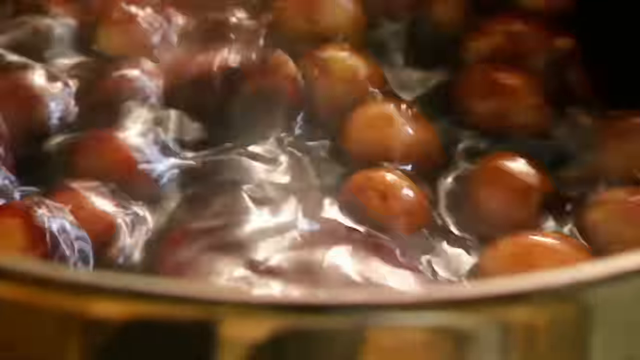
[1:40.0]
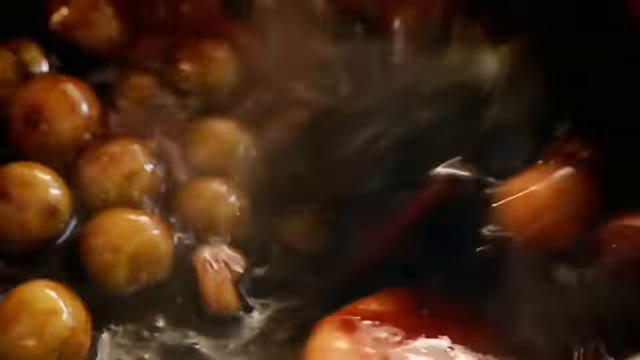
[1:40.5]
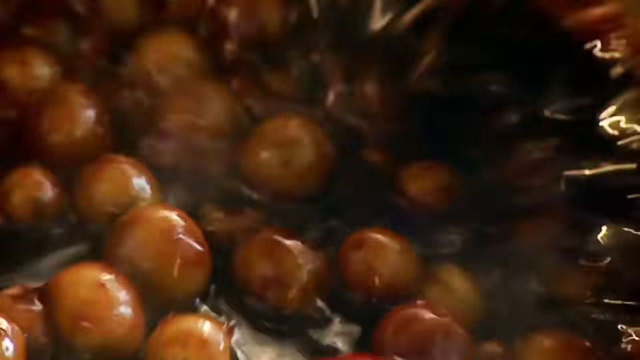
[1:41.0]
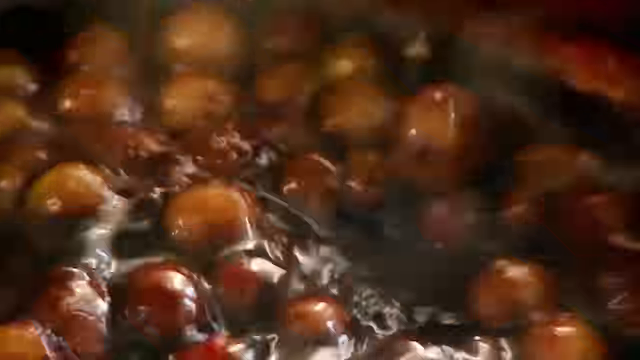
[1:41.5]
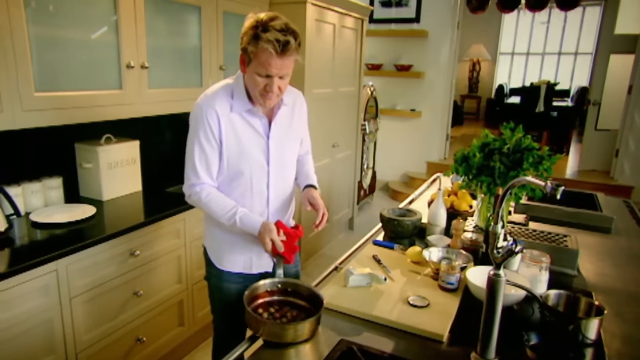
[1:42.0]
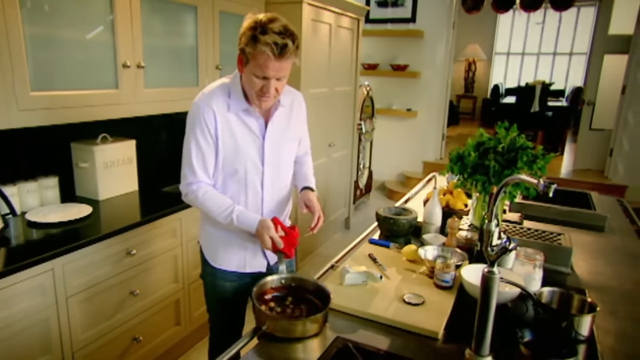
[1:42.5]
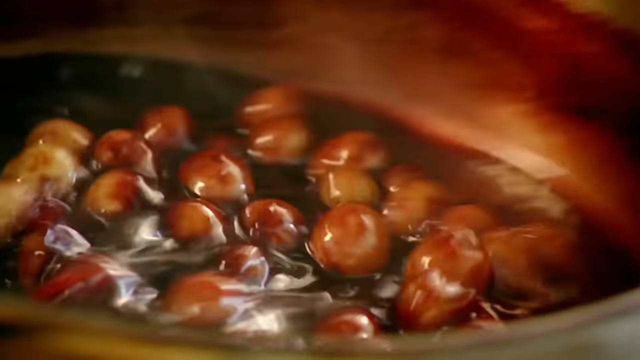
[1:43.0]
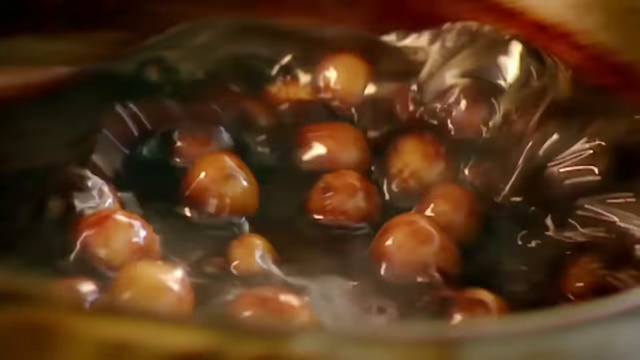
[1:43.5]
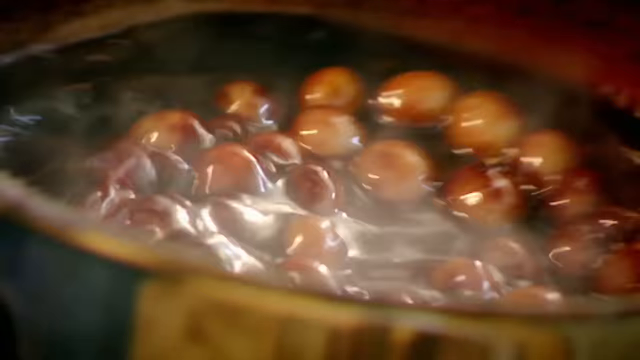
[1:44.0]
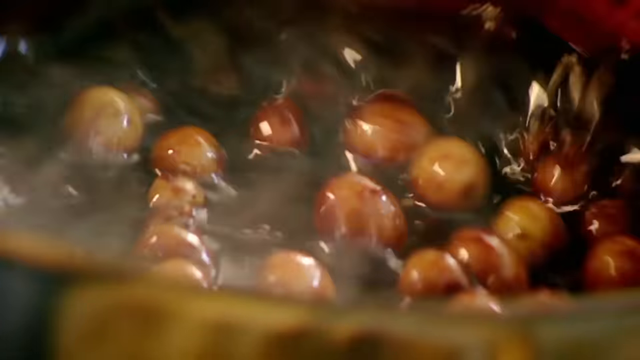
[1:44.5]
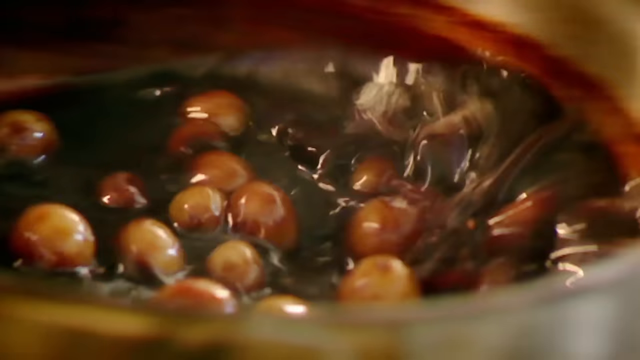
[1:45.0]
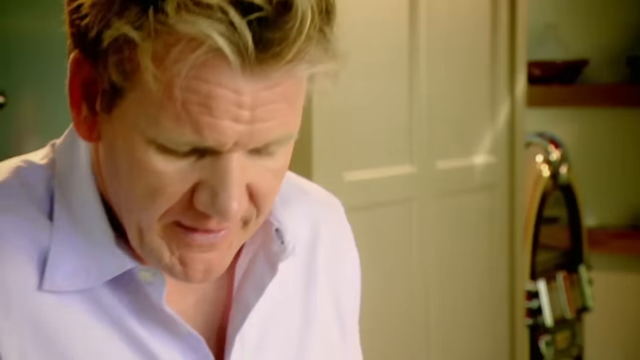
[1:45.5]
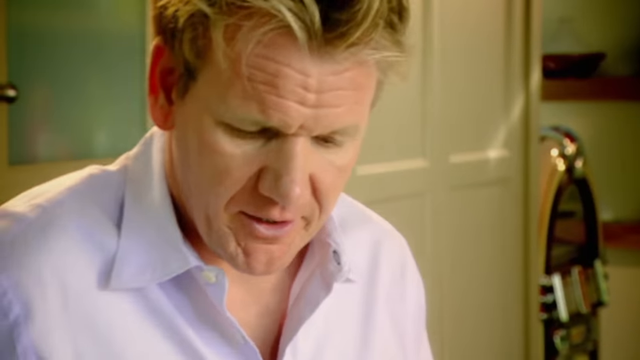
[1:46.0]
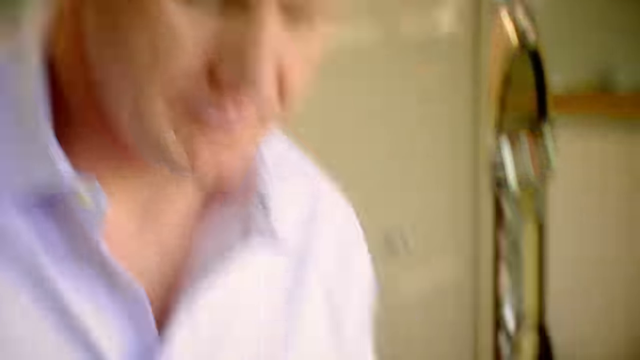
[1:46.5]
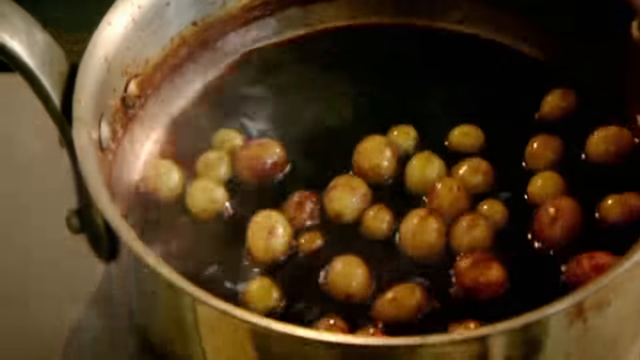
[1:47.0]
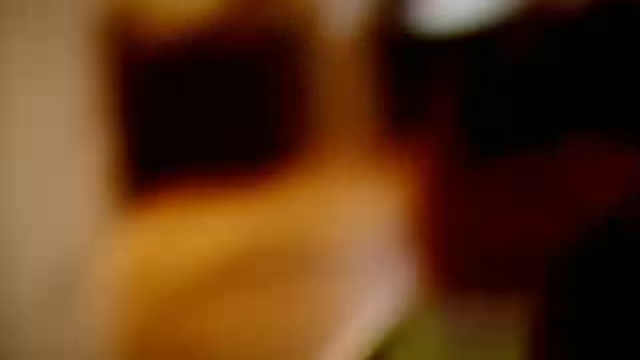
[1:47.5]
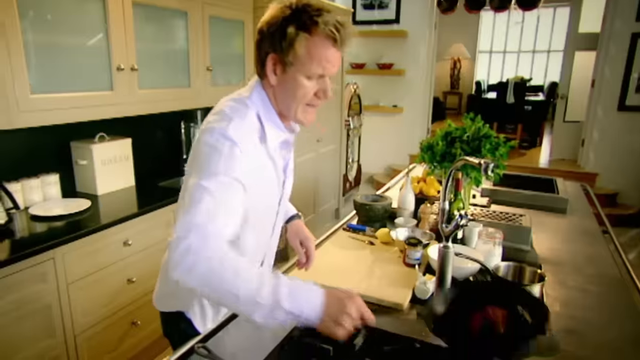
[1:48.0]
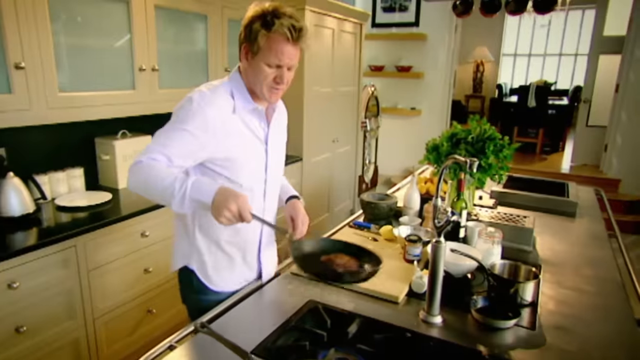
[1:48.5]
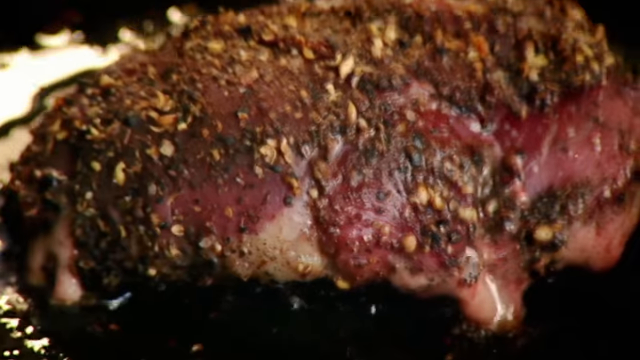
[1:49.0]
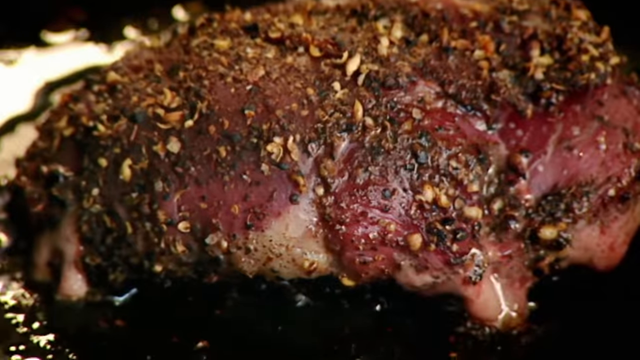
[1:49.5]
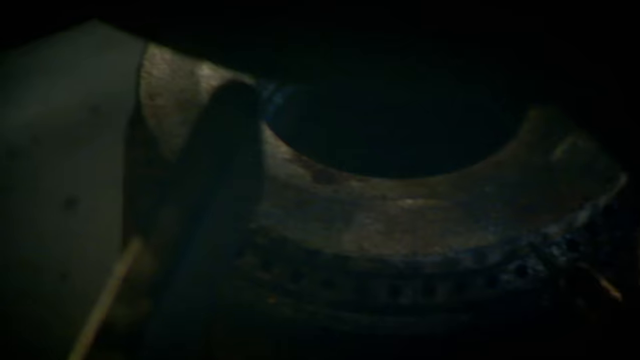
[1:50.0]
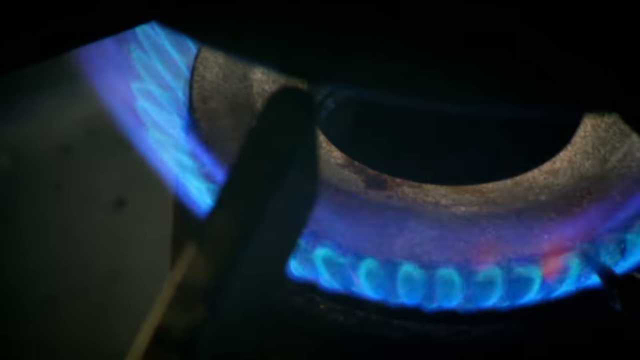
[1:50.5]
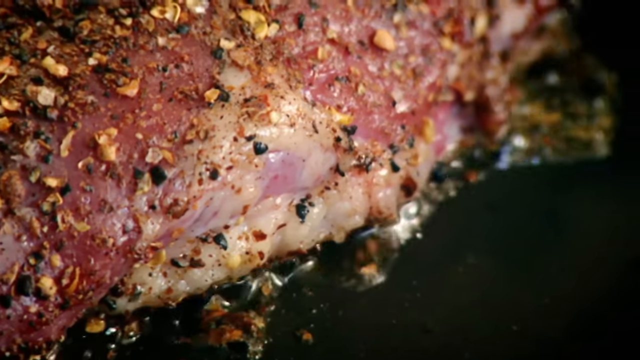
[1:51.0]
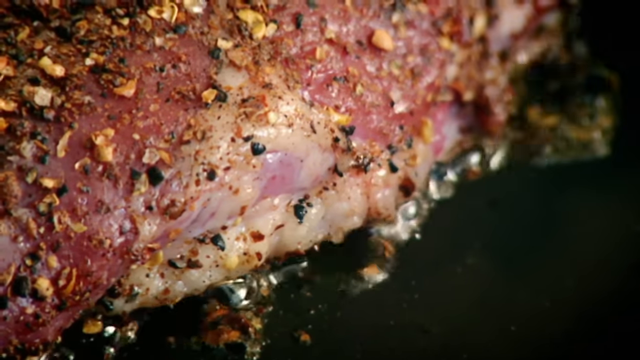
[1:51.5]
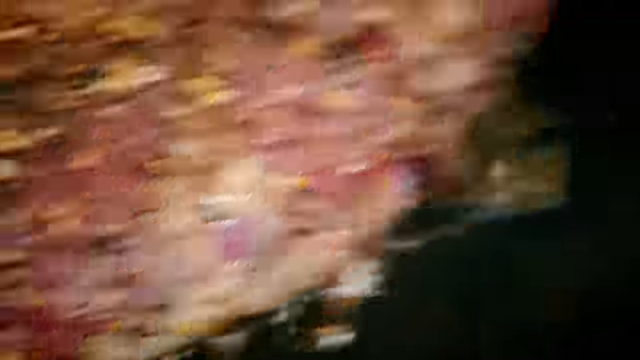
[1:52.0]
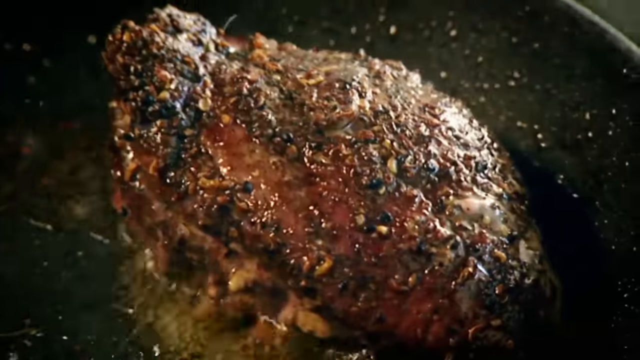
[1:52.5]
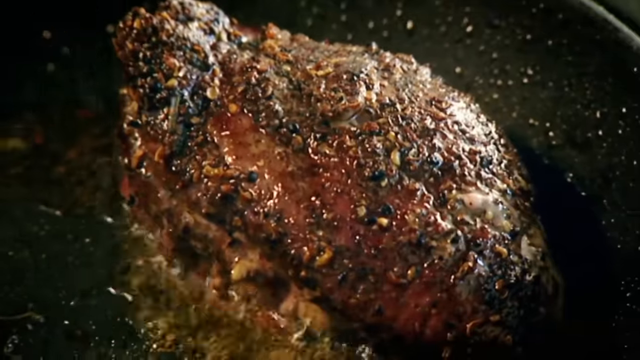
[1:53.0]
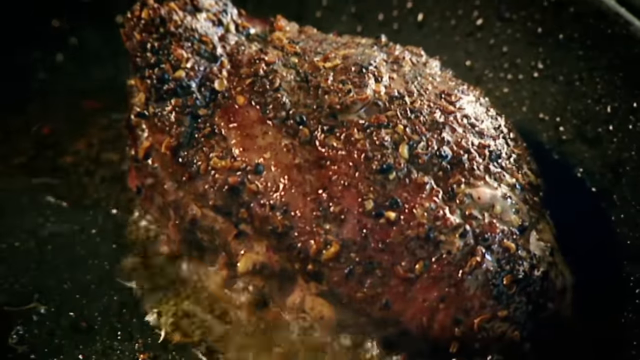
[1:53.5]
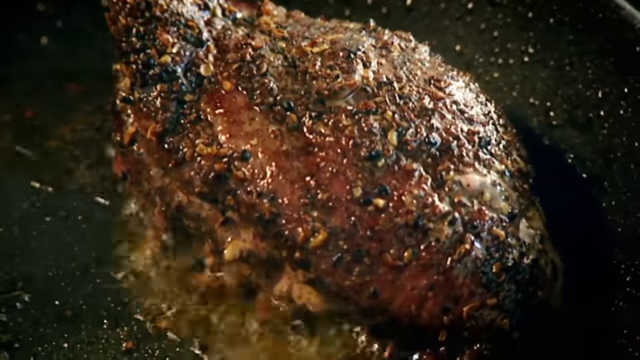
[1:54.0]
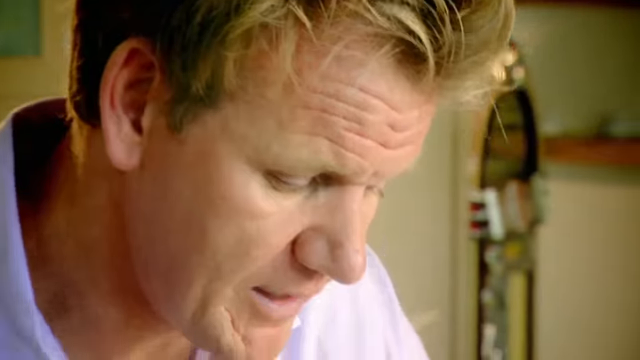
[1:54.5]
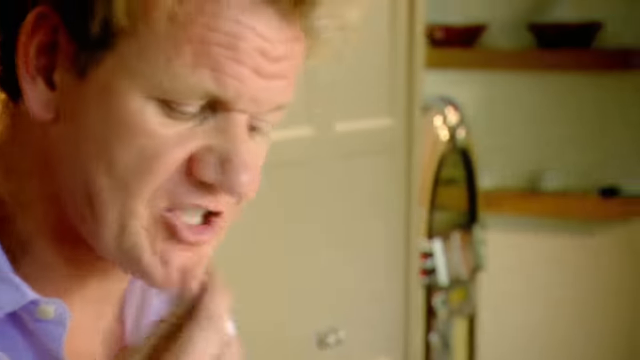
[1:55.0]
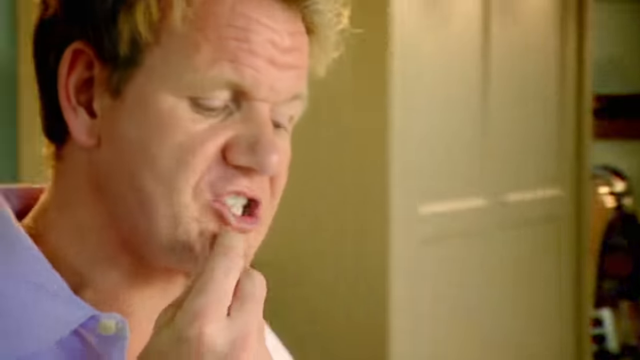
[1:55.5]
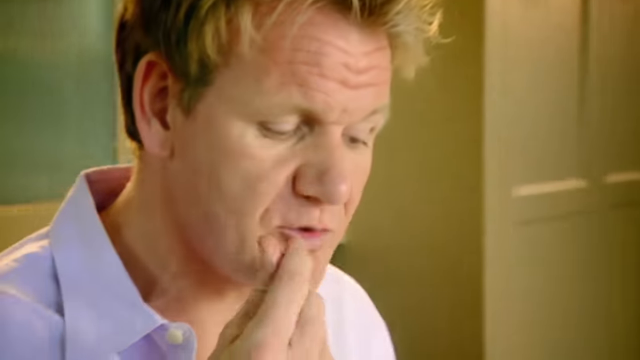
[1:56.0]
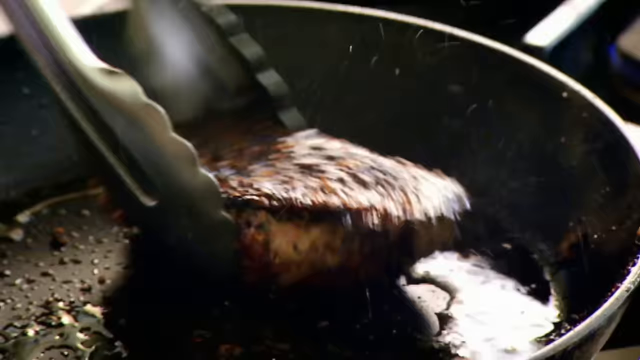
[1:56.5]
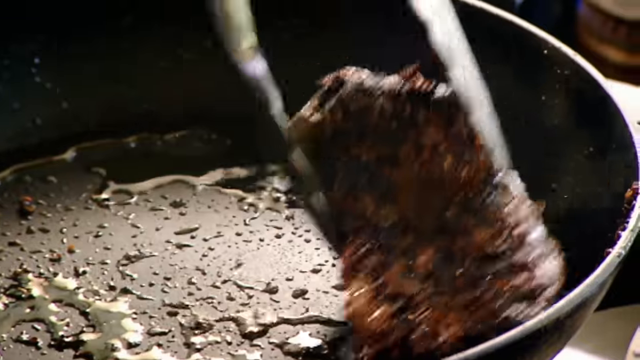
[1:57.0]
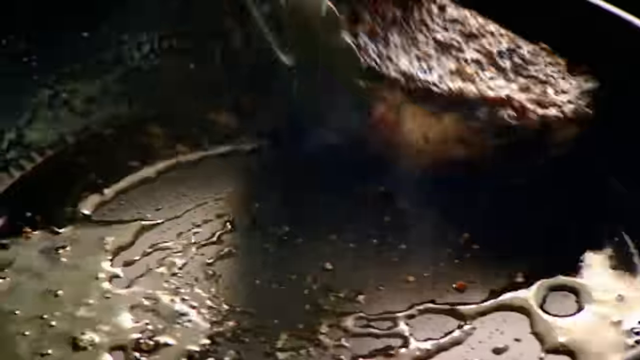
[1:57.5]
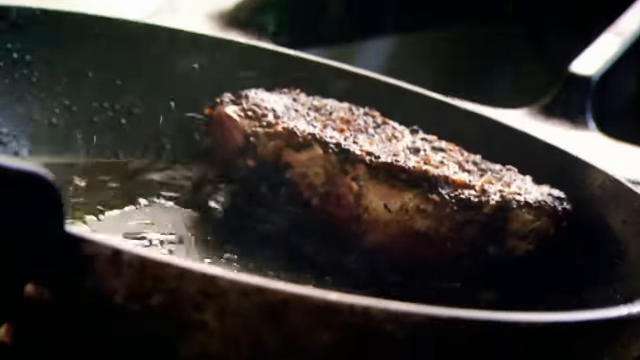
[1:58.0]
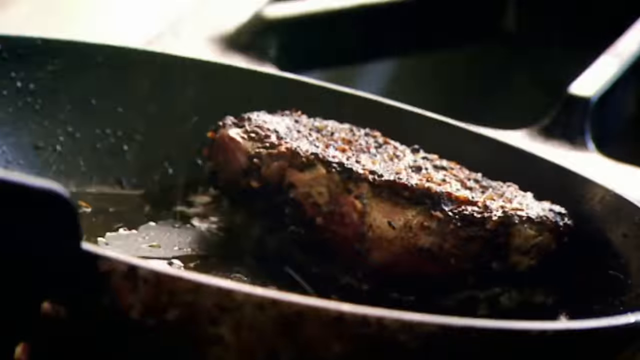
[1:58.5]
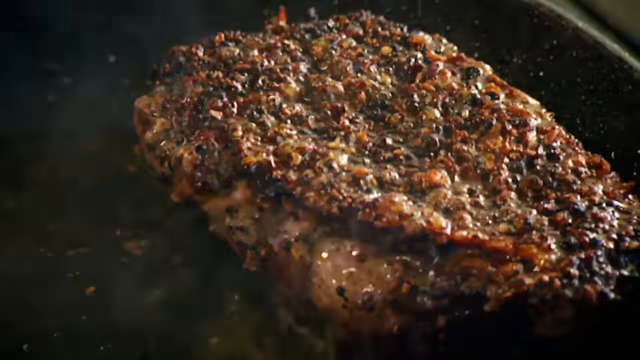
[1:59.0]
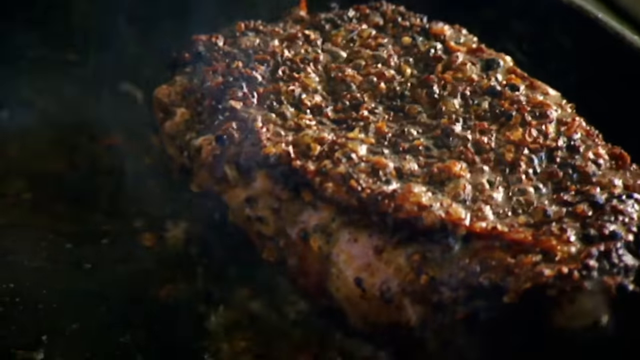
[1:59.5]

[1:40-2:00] The man adds a spoon of butter to the mixture, stirs by moving the pot by its handle, and waits for it to boil. The mixture boils, producing smoke. The pots on the side are stained inside with red wine, and the grapes are also stained, now with a tint of red. When he stirs the pot, he holds the handle with a red cloth. In the kitchen there are green plants, possibly herbs planted beside the stove, which appears to be on an island. He checks on the steak, which is now golden brown. It is lightly boiling as oil keeps popping from the pots.